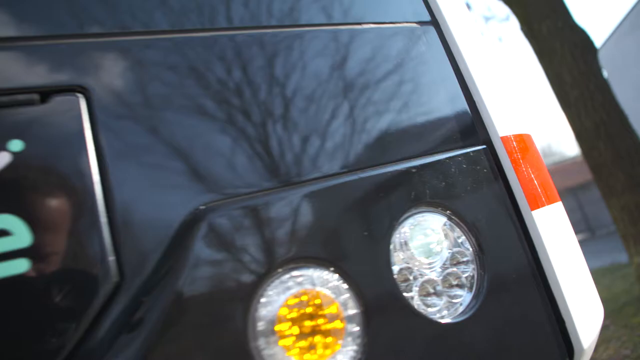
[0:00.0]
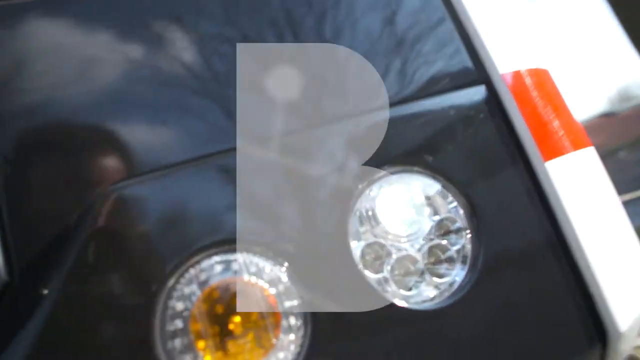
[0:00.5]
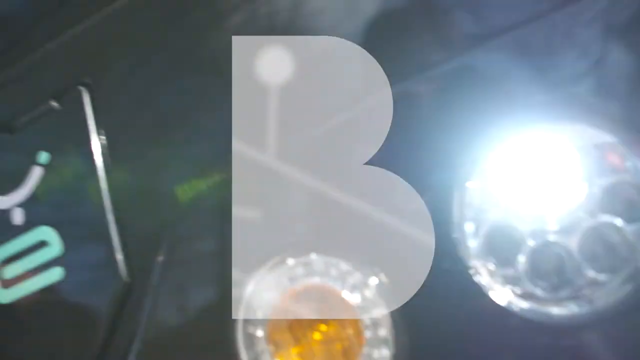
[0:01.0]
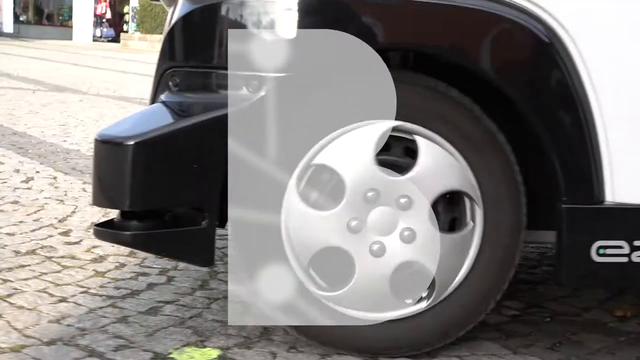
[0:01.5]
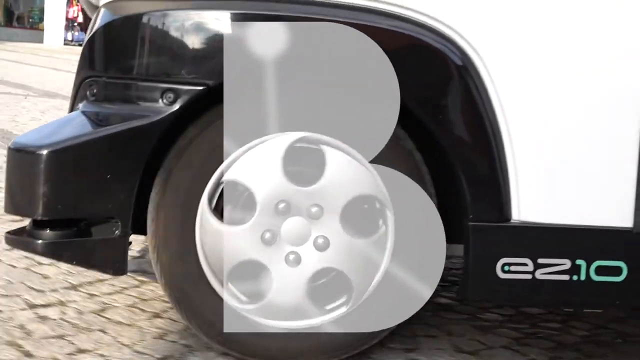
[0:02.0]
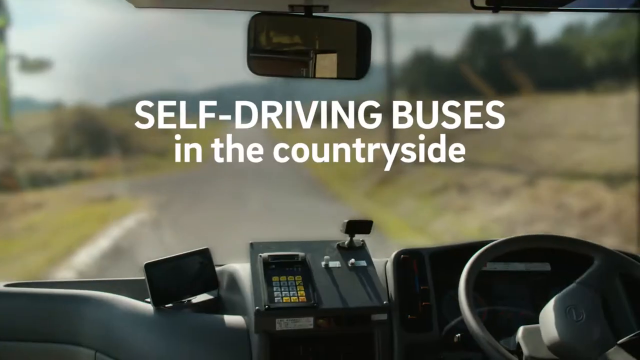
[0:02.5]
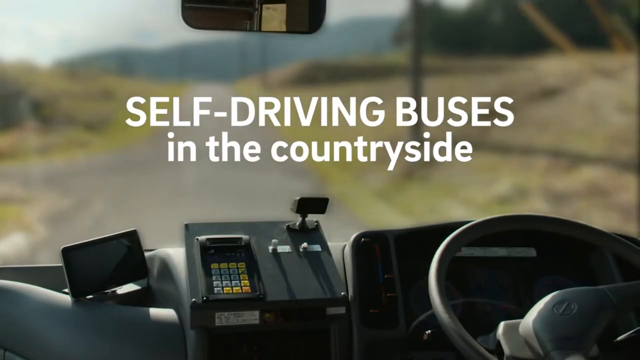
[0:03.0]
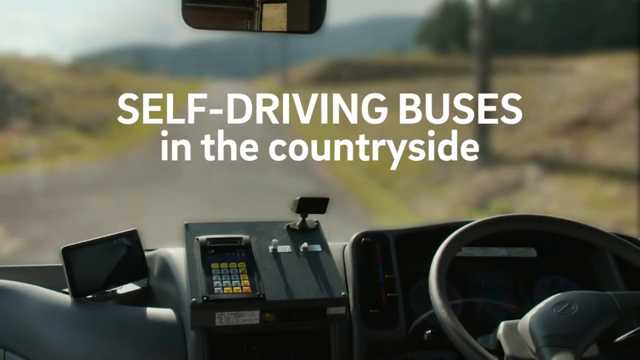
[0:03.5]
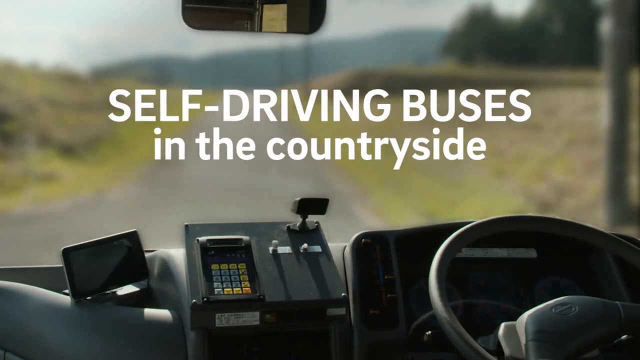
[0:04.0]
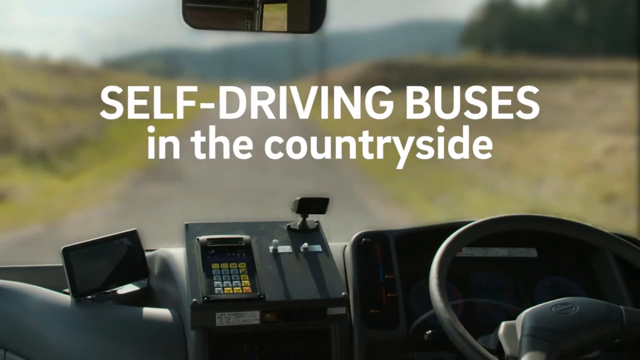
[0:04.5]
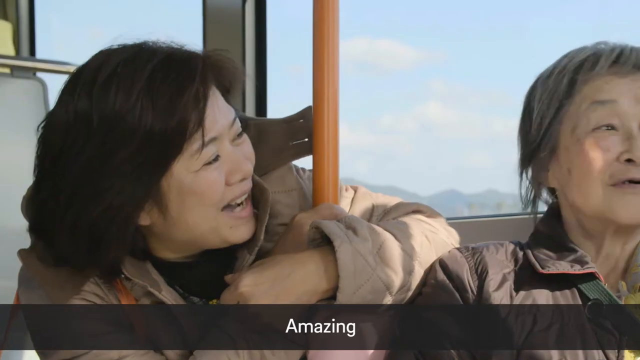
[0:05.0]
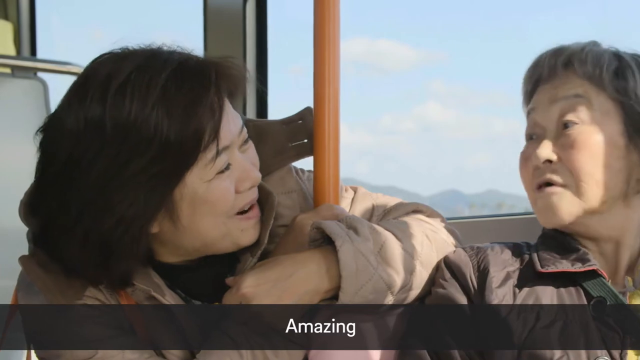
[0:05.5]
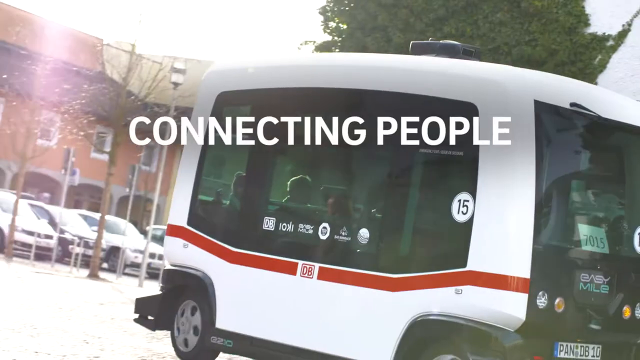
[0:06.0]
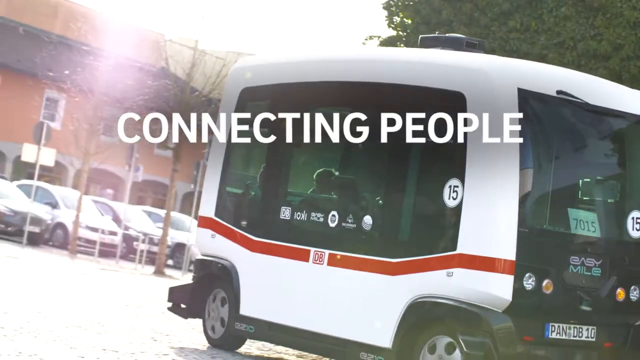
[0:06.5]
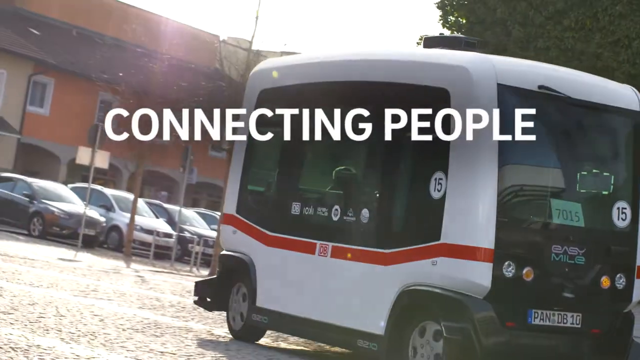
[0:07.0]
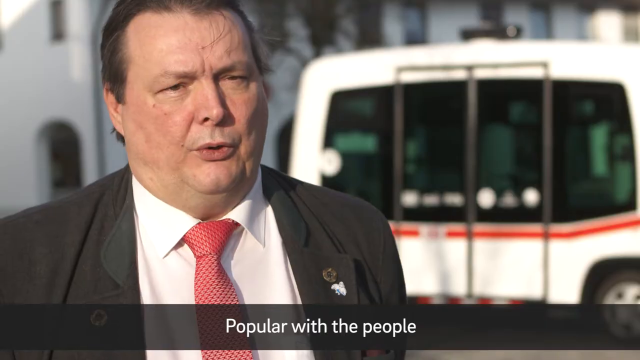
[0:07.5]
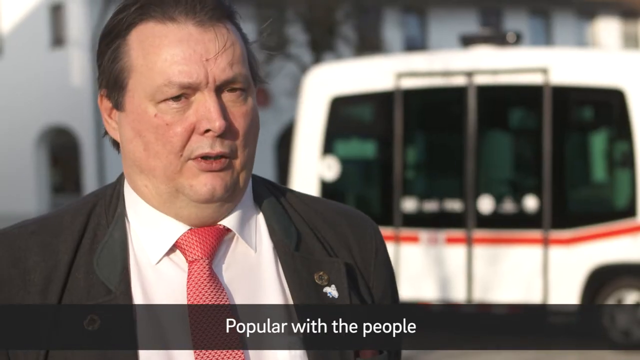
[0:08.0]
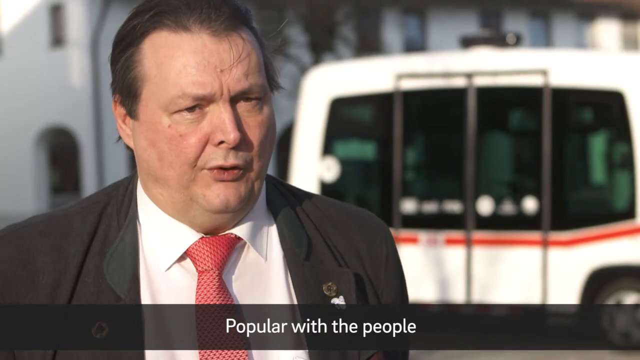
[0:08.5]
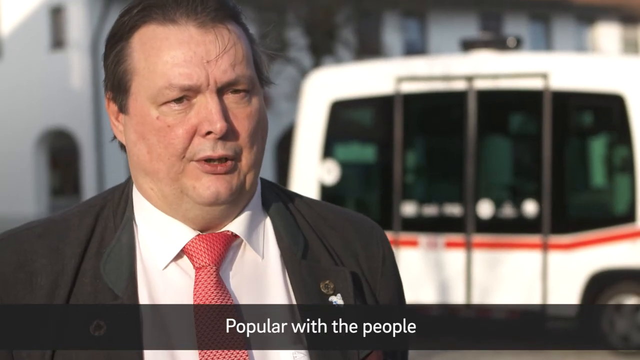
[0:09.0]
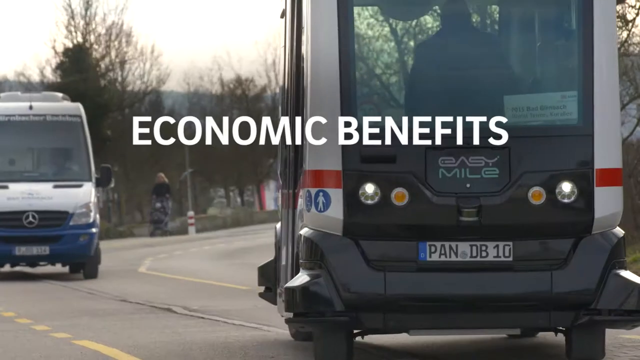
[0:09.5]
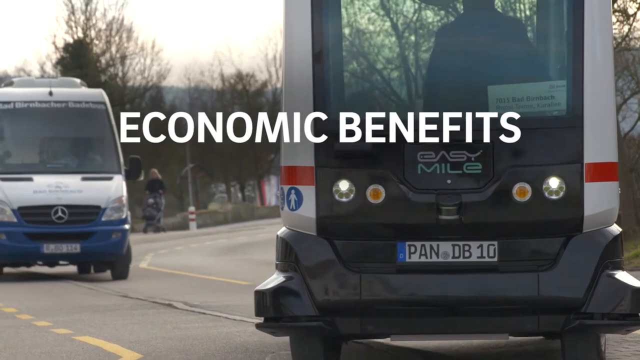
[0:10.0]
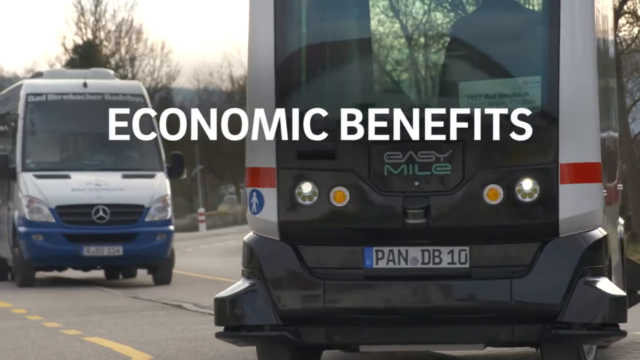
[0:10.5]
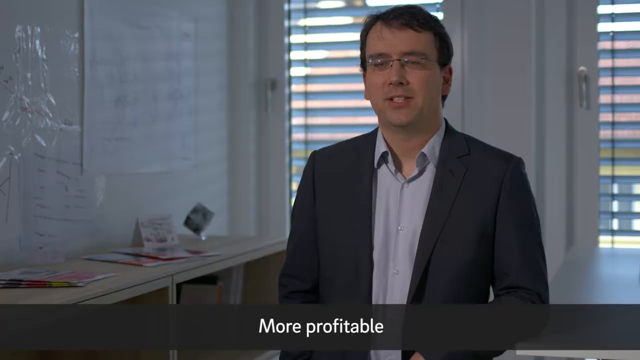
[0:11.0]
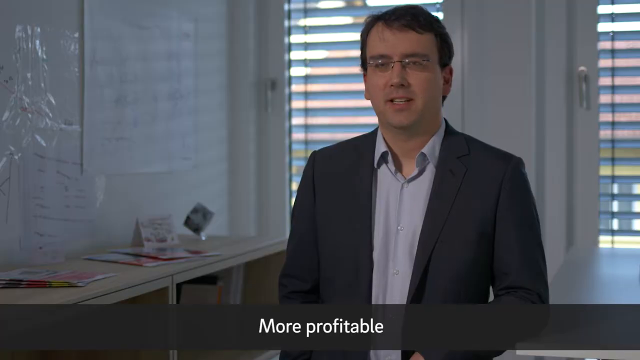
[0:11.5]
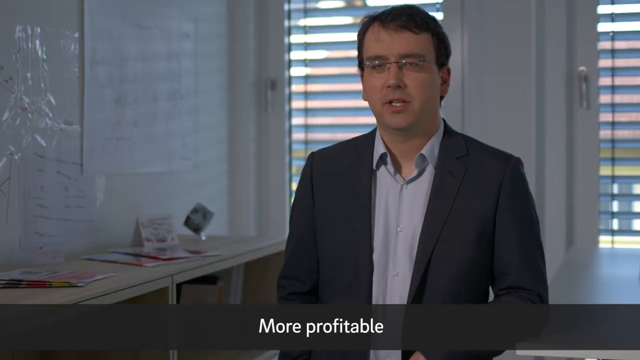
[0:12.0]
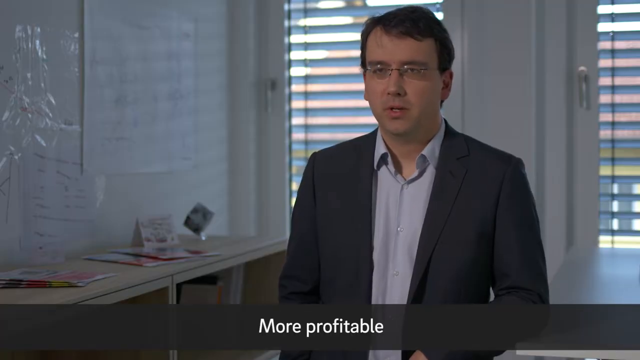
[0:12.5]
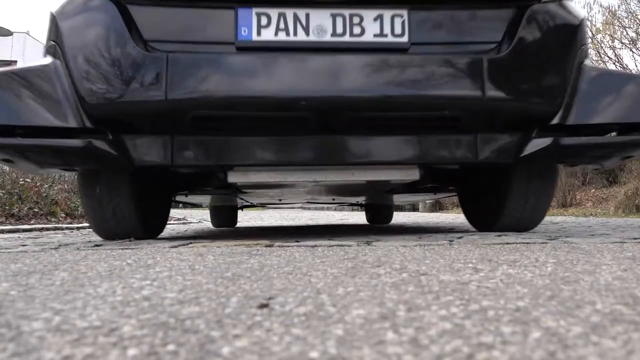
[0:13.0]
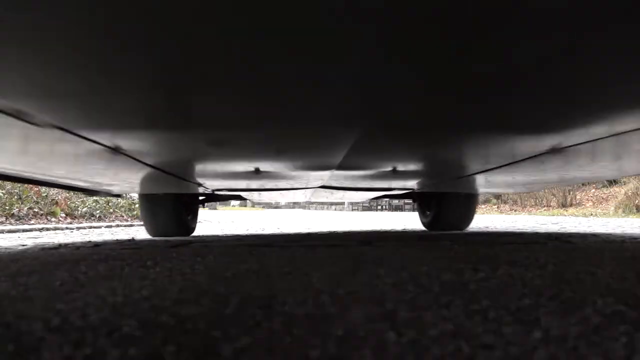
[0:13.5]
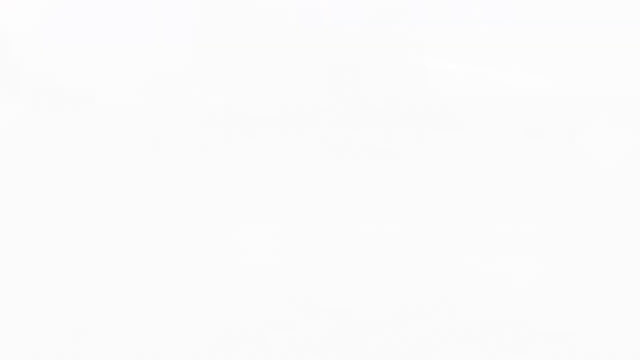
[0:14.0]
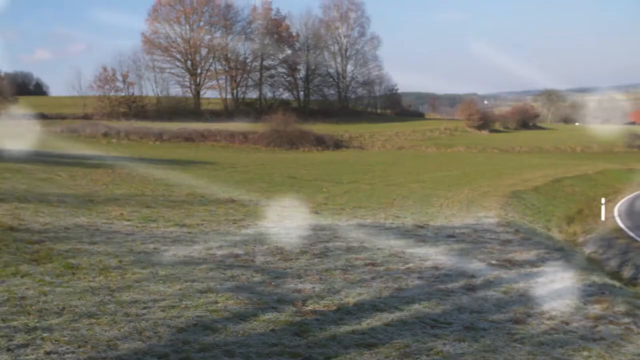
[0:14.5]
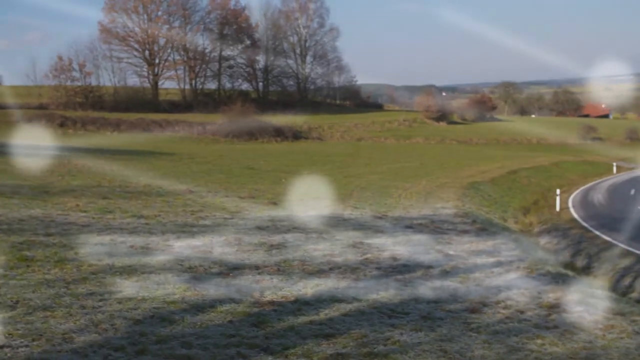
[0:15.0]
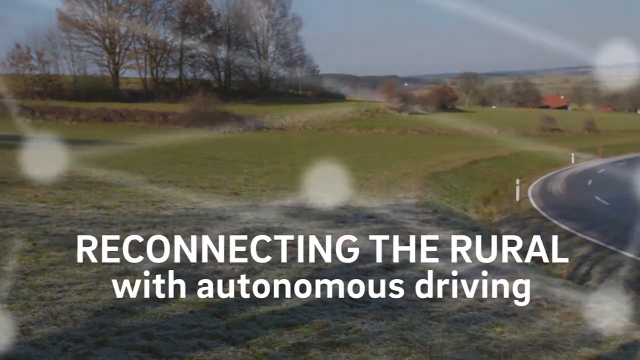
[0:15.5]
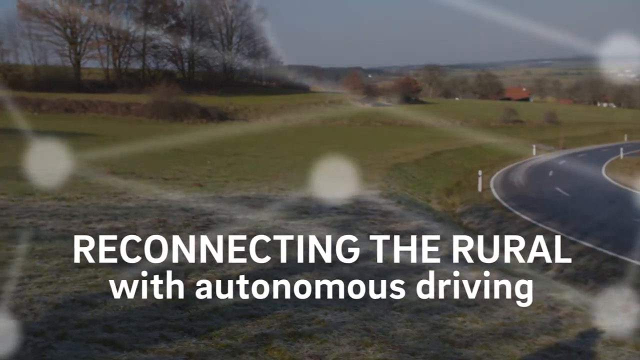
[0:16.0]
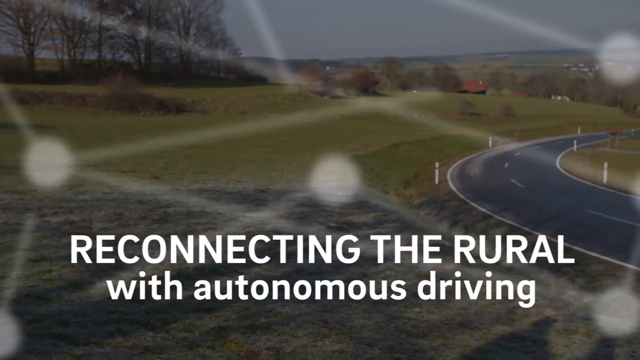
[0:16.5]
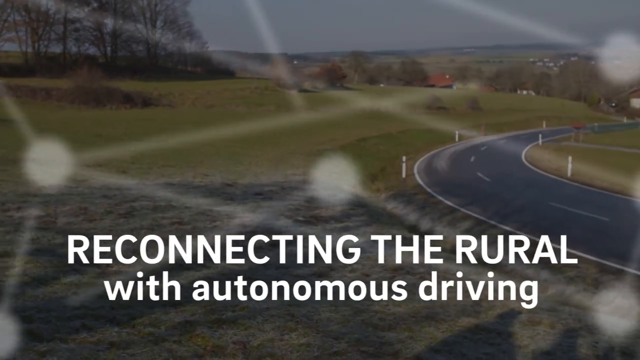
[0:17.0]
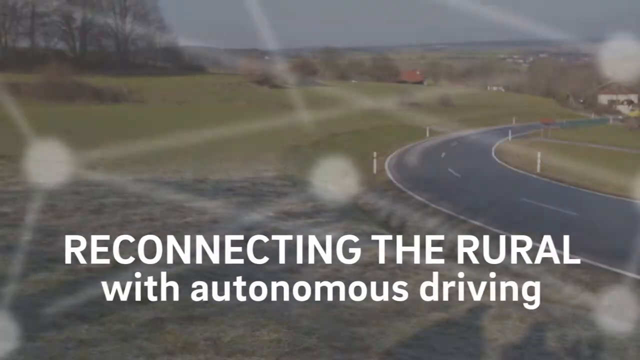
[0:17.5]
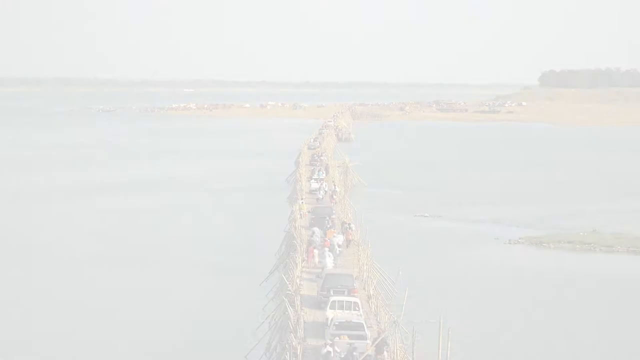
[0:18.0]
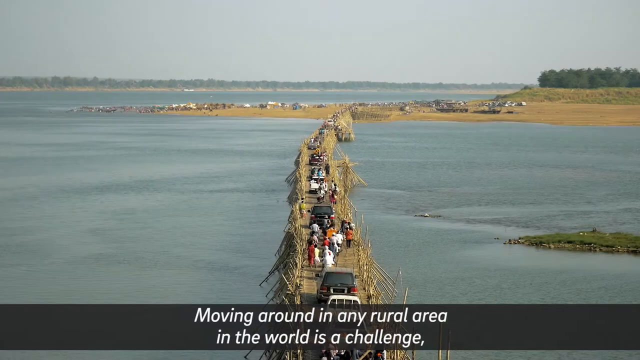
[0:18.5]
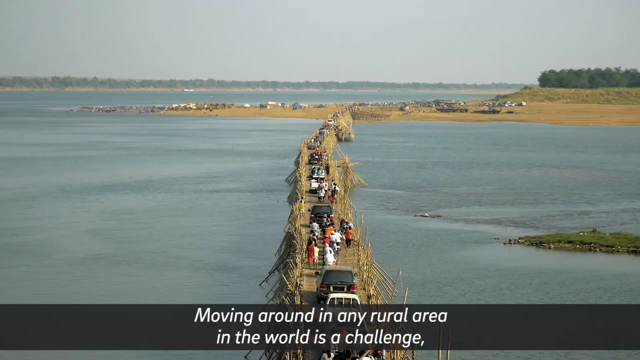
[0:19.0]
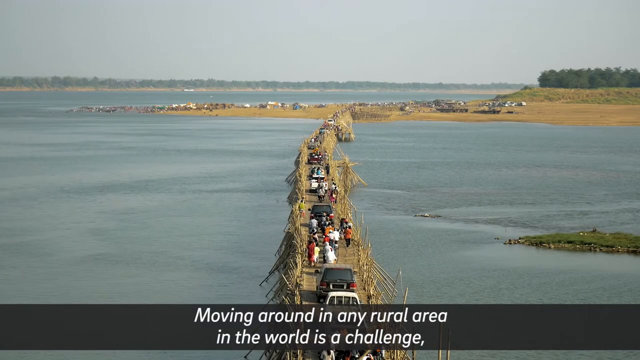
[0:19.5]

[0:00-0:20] The back of a vehicle is shown. White text in all capital letters ends with "driving buses," and beneath it lowercase text reads "in the countryside." The front of a bus appears, with the driver's side on the right of the vehicle rather than the left. Two Asian people are talking. The bus is mostly white with a red stripe, and what looks like the bus number, 7015, appears on the right side of the bus in a window. Text reads "economic benefits, more profitable," attributed to one of the people speaking. Further text reads "reconnecting the rural with autonomous driving."